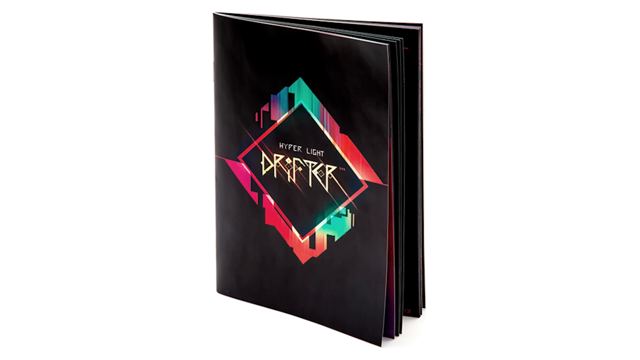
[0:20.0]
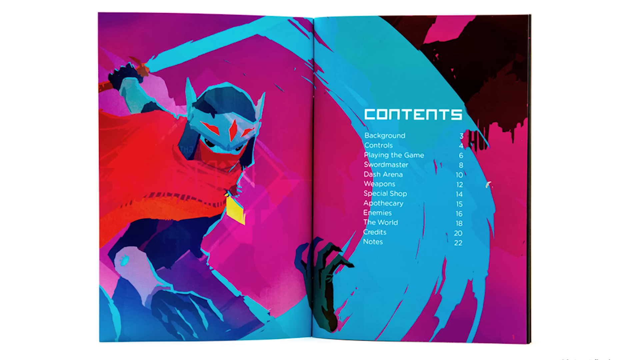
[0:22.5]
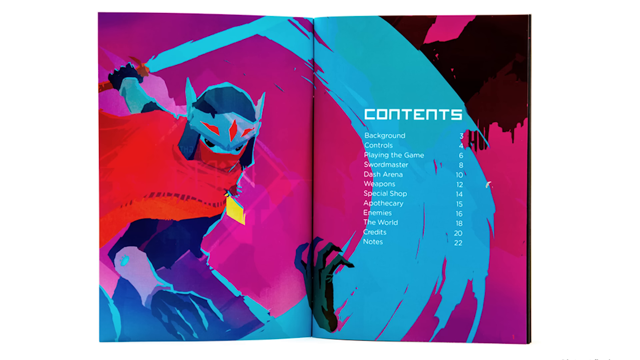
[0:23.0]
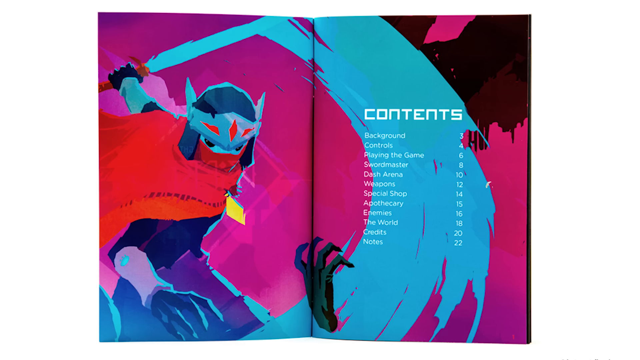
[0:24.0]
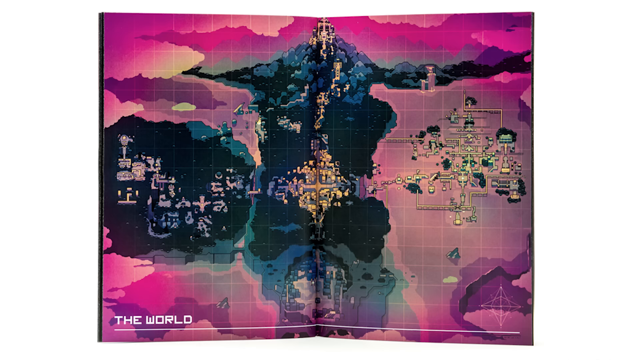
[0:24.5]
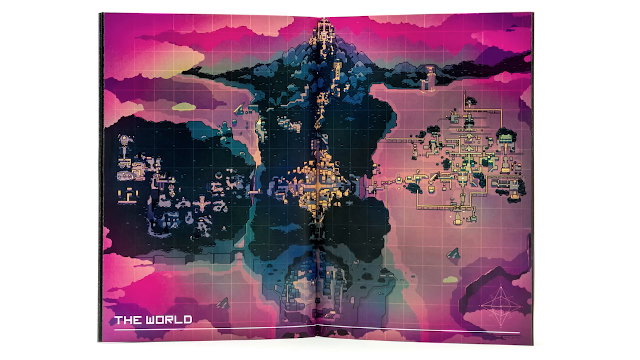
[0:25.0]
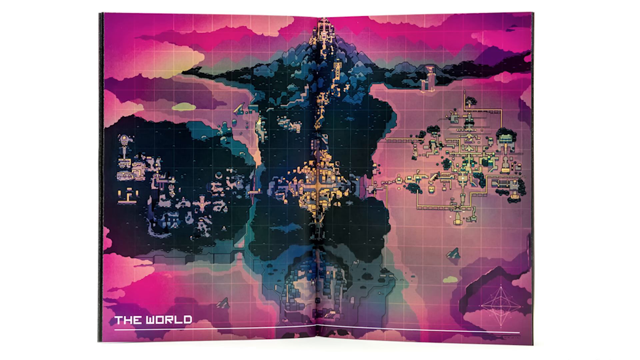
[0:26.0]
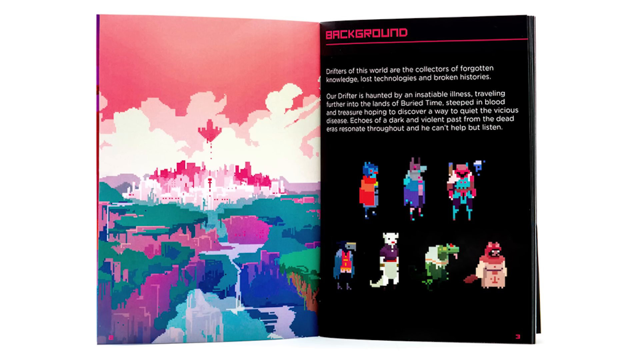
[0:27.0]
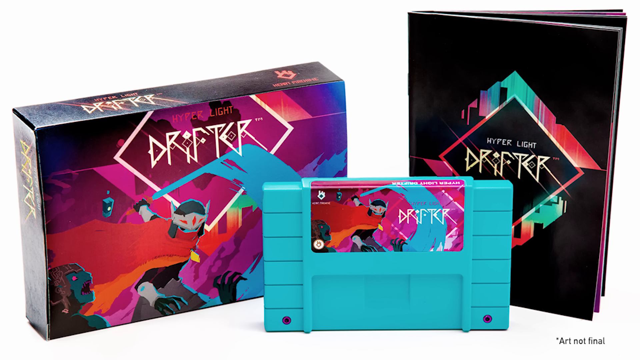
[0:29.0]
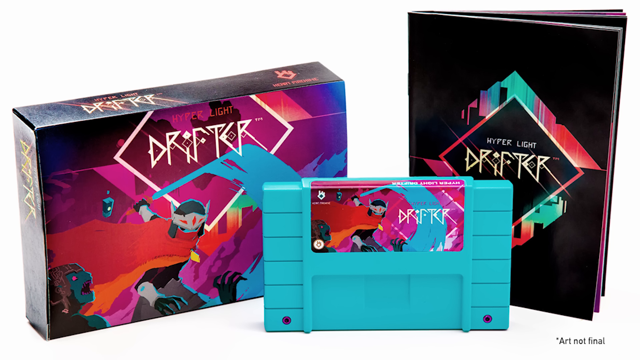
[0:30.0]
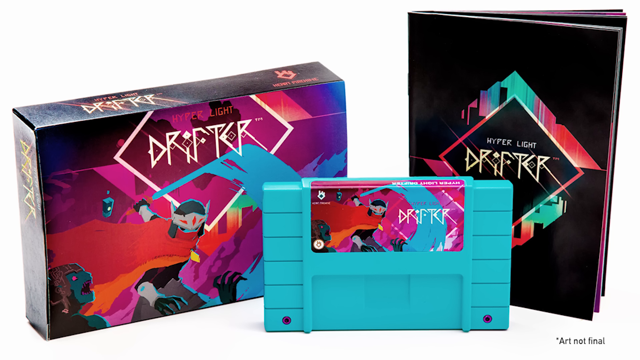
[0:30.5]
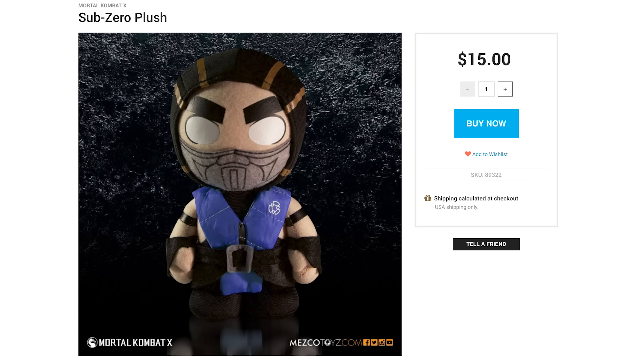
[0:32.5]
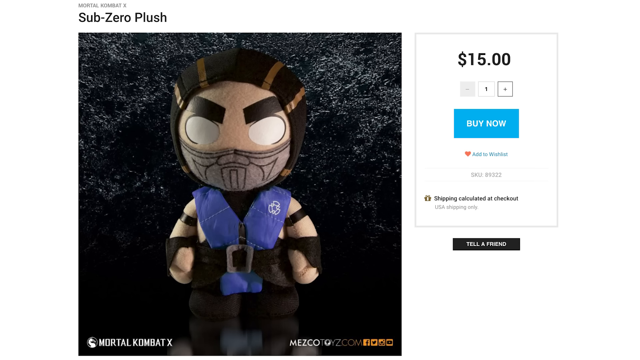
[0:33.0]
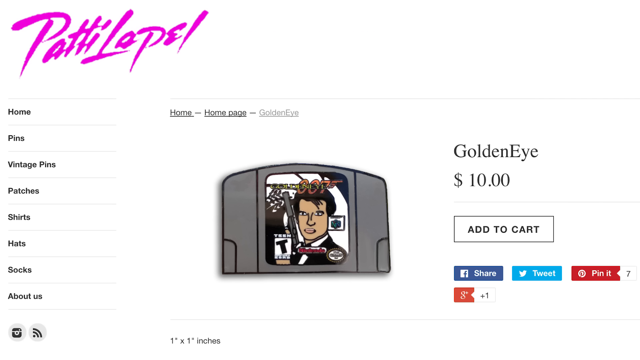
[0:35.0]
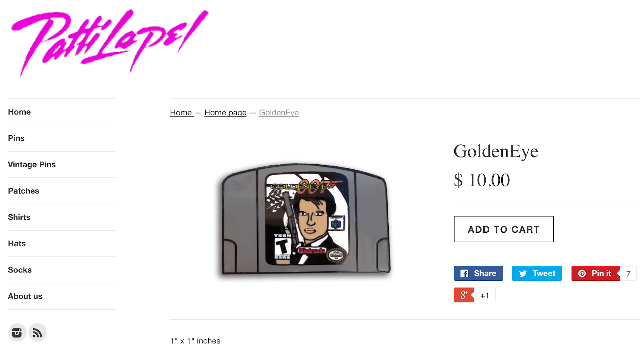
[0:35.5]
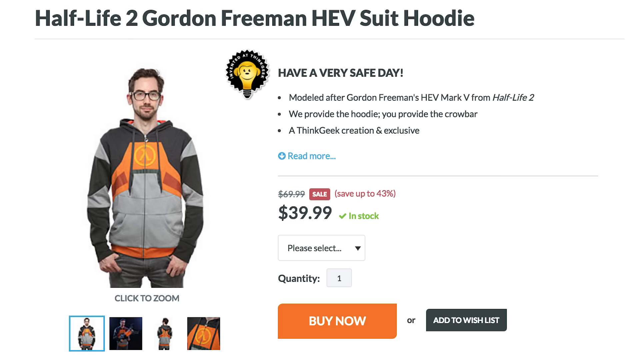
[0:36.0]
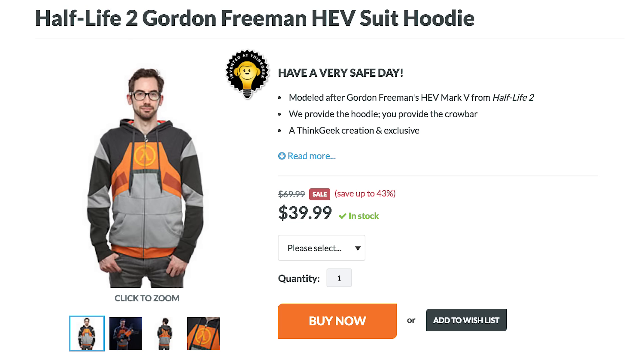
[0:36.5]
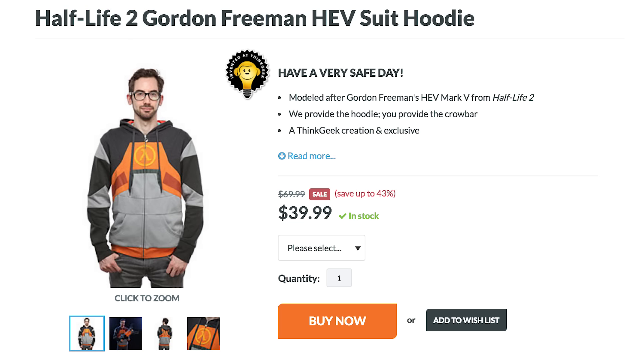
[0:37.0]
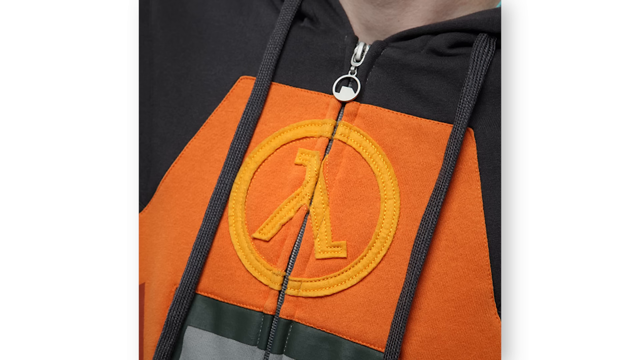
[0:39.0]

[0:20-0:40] A booklet reading "Hyper Light Drifter" is shown with its table of contents, listing sections such as the world, the big map, background, characters, controls, something called Dash Arena, weapons, a special shop and the world map. The book details information about the game Drifter. The game's box, case and cover are shown. The world map shows different areas to travel to and activities to do, a page describes the drifters of the world as collectors of forgotten knowledge, and the different playable characters appear. Ads follow for items such as a plush, GoldenEye and a Half-Life 2 Gordon suit, and a man wears a sweatshirt that can be bought.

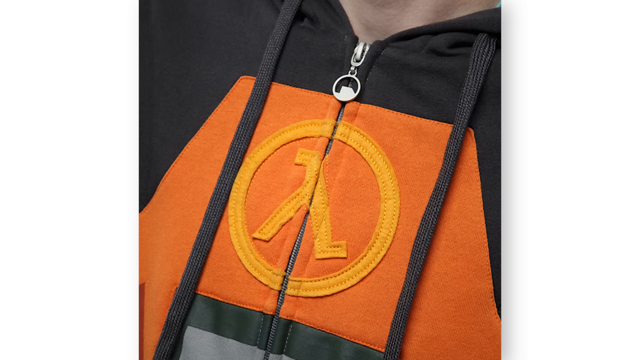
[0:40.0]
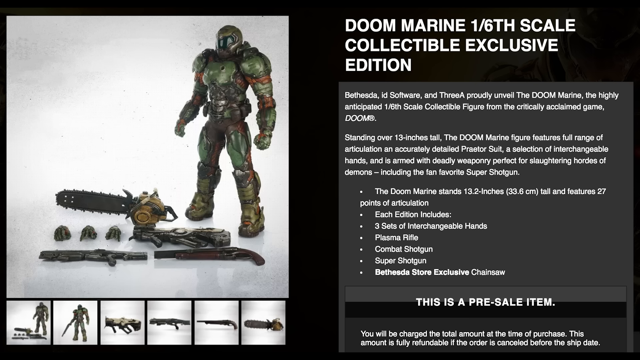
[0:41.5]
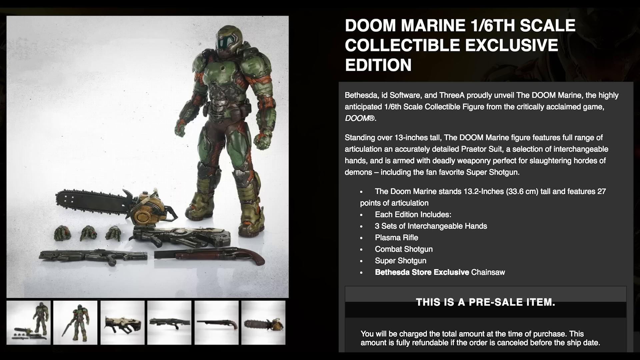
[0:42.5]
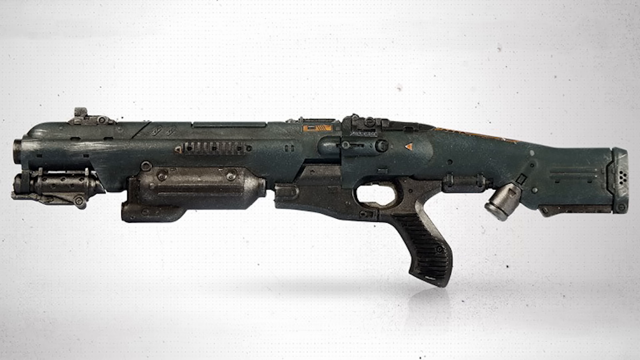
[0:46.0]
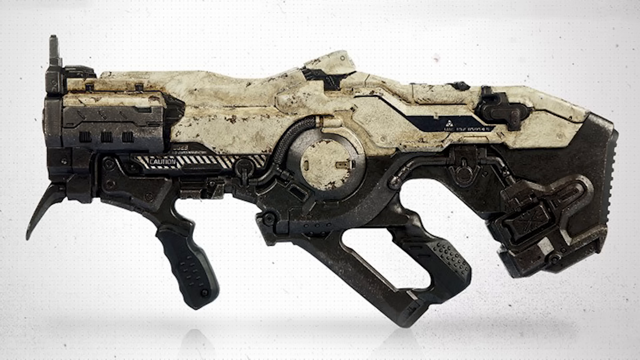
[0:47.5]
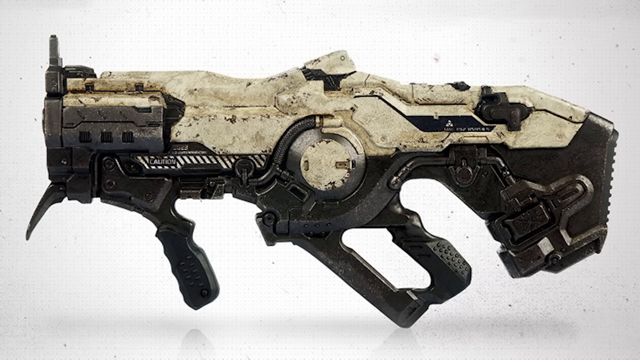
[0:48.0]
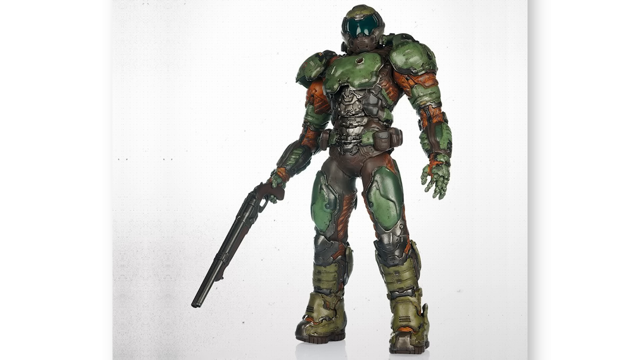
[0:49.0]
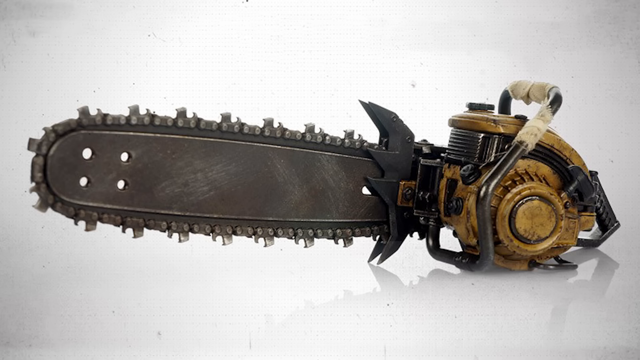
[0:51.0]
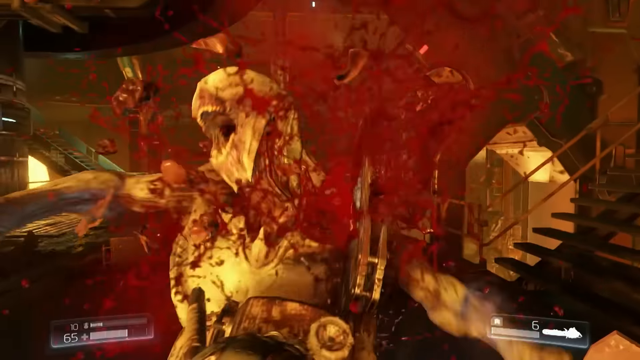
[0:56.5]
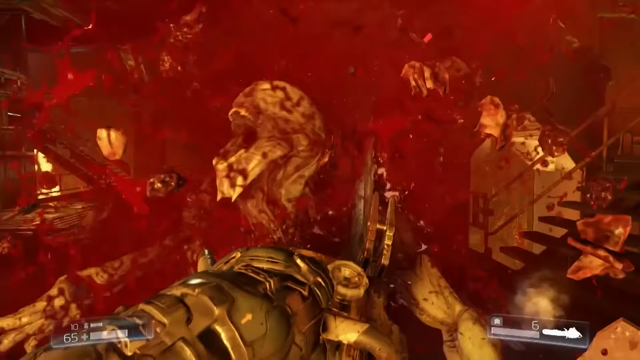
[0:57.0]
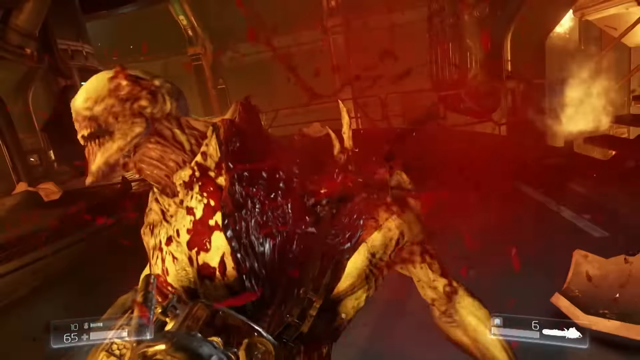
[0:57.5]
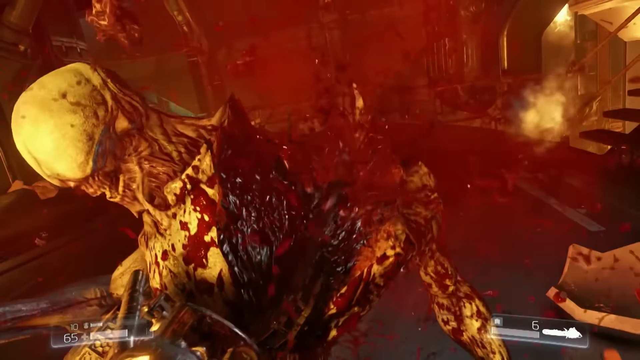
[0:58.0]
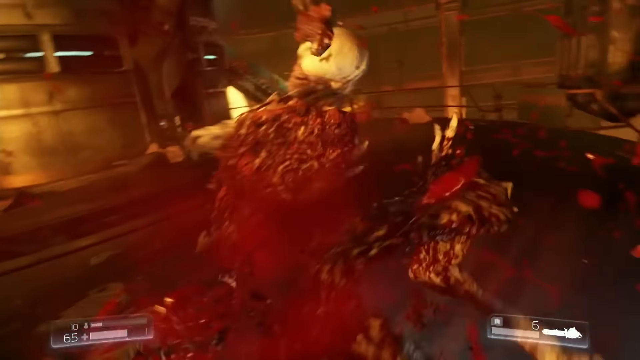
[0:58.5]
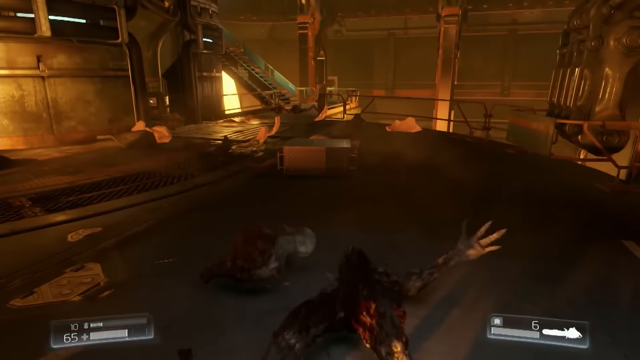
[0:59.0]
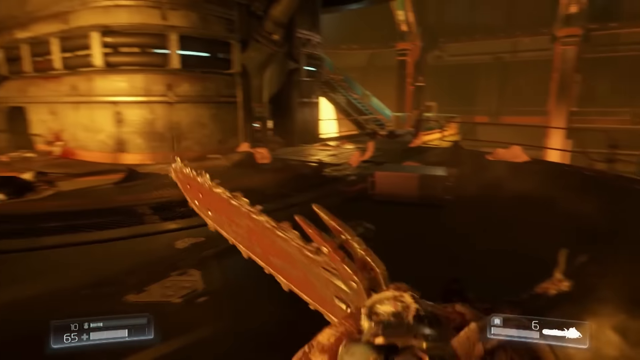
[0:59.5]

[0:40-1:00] A big chainsaw with sharp edges all over it is shown, and in the game it is used to kill a zombie-like figure. Something called Doom Marine appears, apparently from the game Doom; it comes with a bunch of different bombs and looks somewhat like a character from Halo. The game shows a weapon's health along with a short description of the weapon. The collectible stands 13 inches tall and features many items to customize it with, including guns such as super shotguns, which are used in the game to kill enemies. The game setting looks like an abandoned warship or something similar, and the view is somewhat yellow.